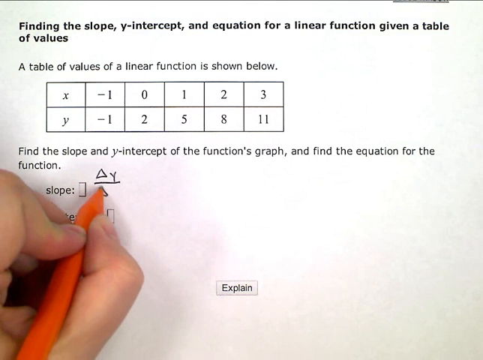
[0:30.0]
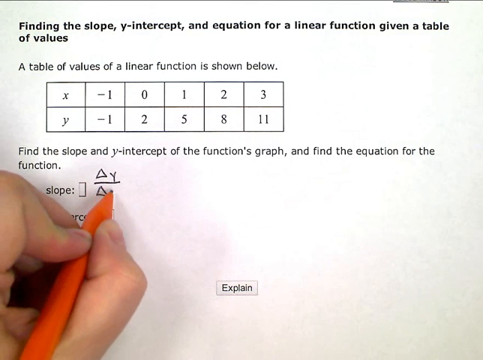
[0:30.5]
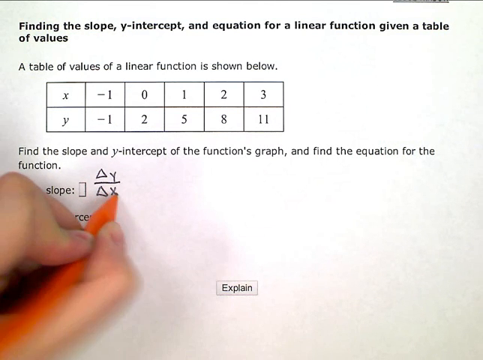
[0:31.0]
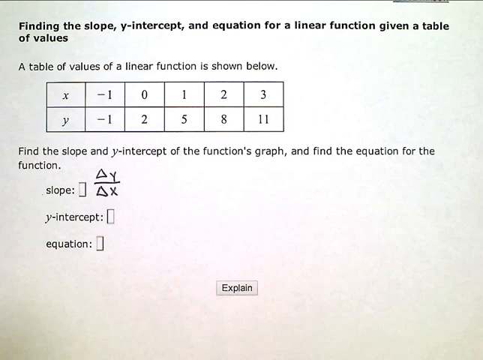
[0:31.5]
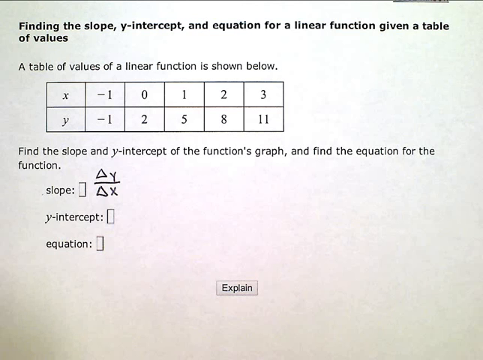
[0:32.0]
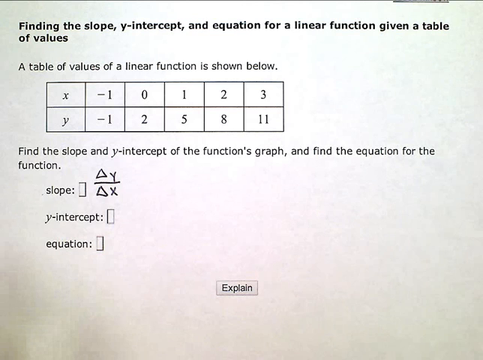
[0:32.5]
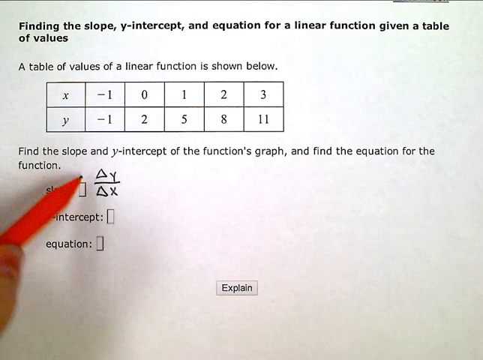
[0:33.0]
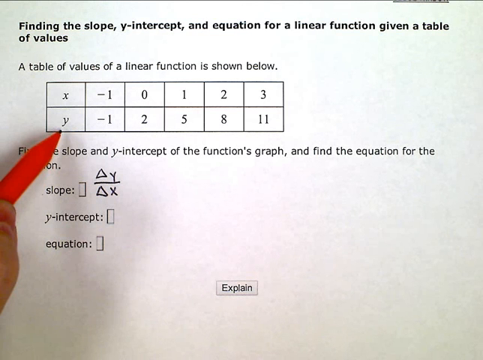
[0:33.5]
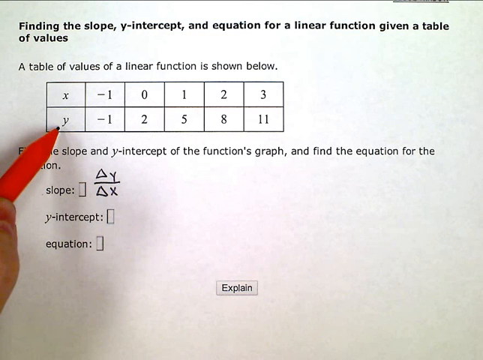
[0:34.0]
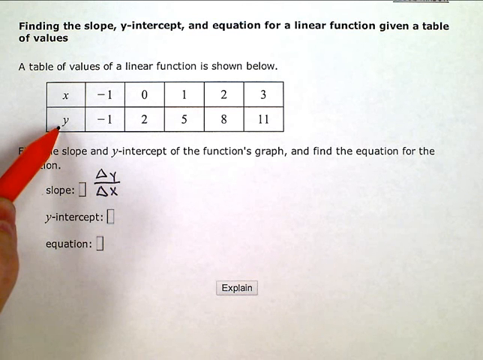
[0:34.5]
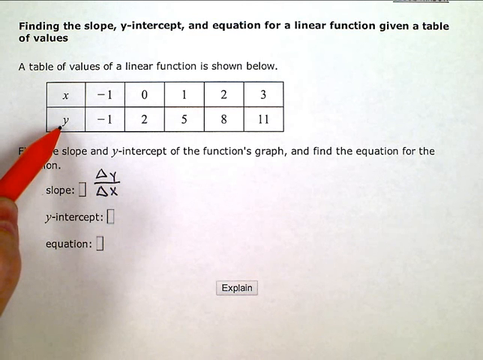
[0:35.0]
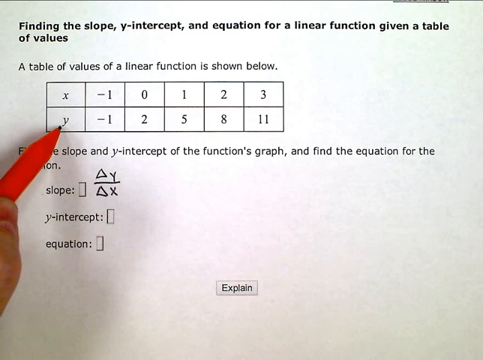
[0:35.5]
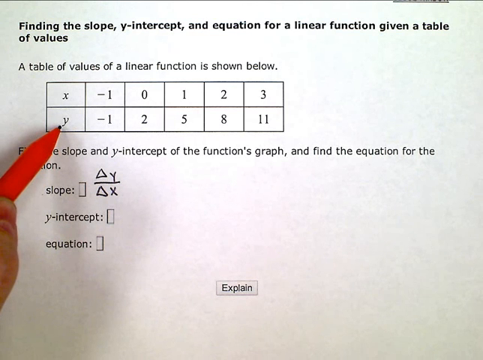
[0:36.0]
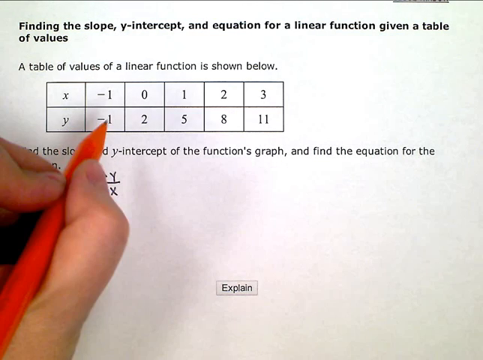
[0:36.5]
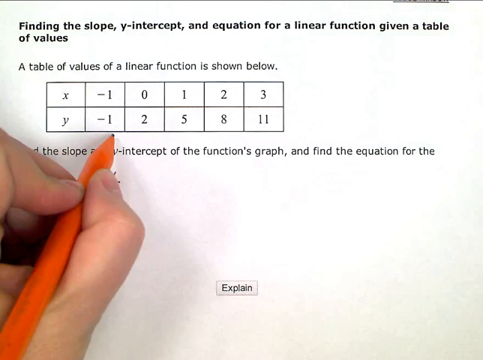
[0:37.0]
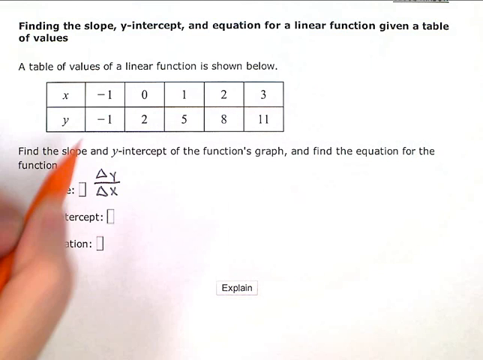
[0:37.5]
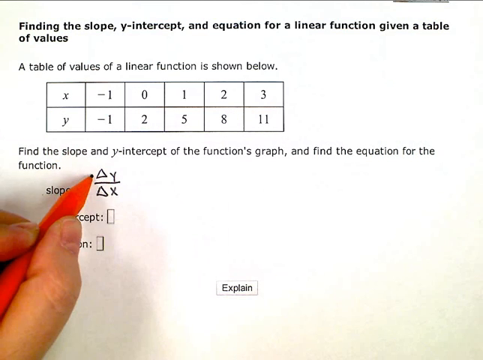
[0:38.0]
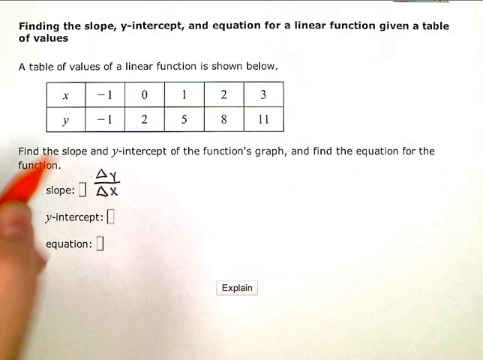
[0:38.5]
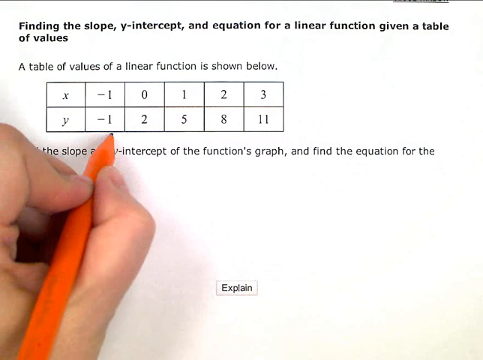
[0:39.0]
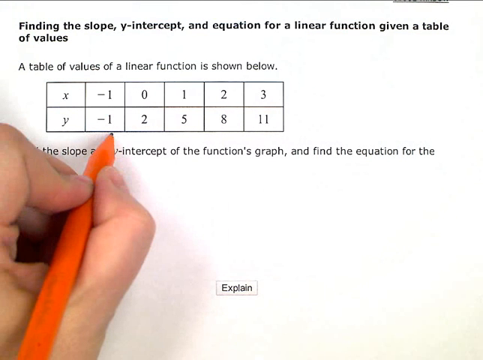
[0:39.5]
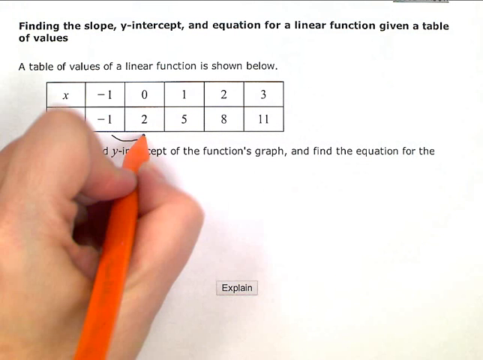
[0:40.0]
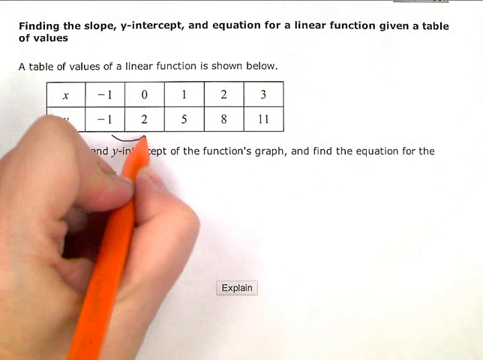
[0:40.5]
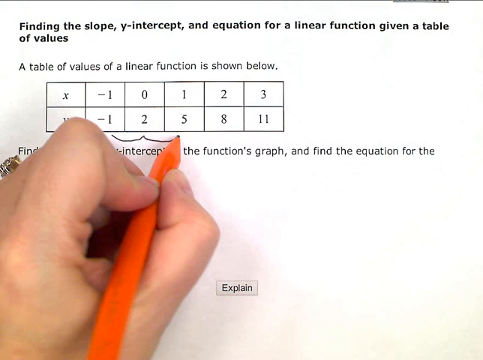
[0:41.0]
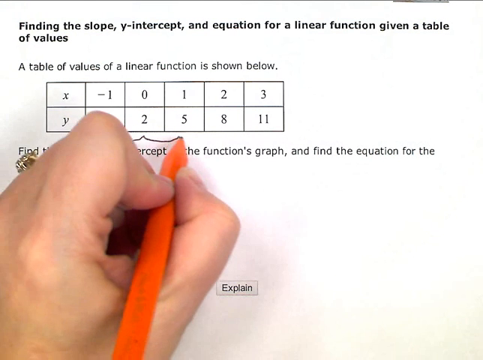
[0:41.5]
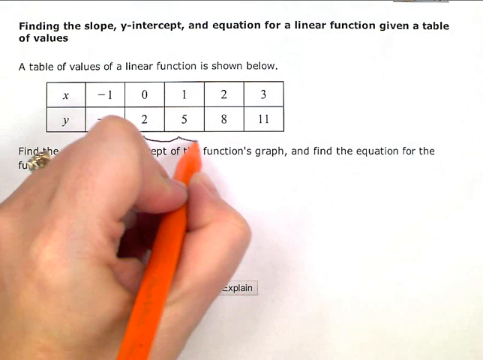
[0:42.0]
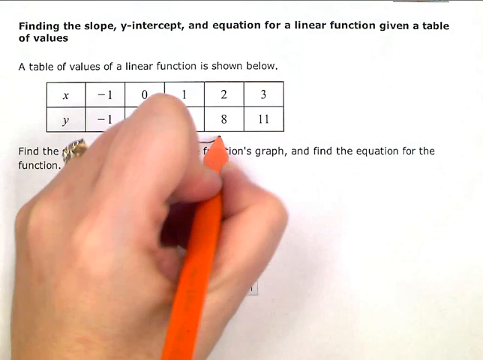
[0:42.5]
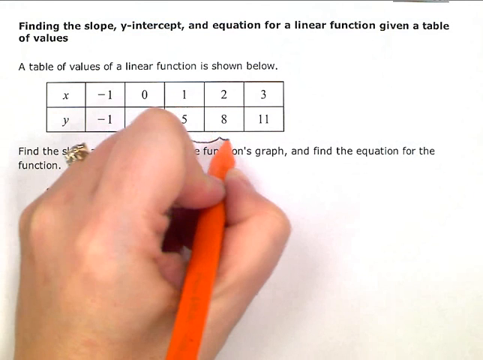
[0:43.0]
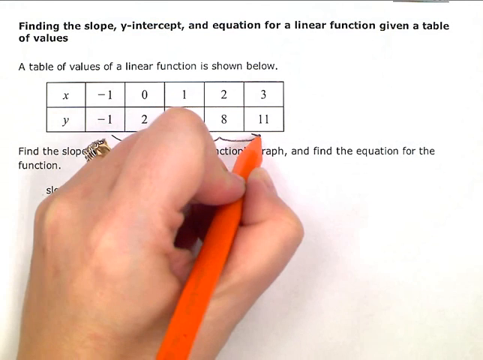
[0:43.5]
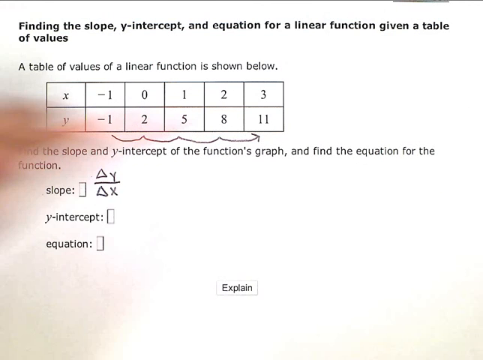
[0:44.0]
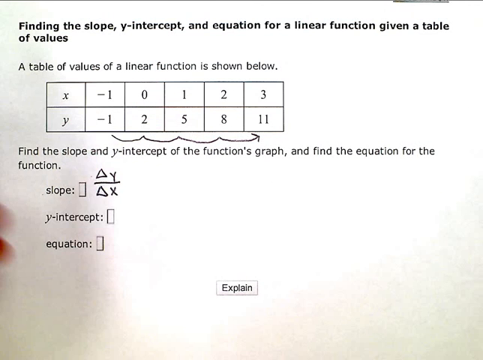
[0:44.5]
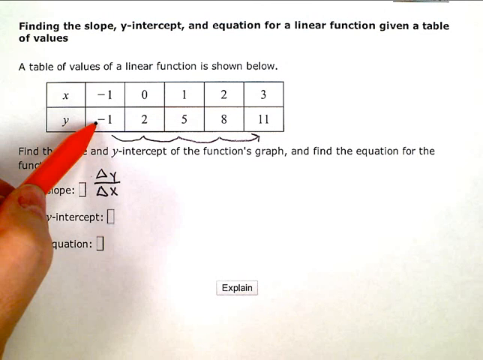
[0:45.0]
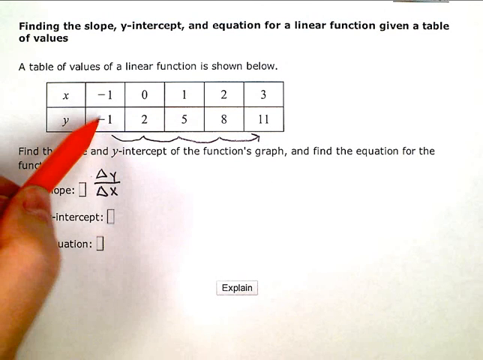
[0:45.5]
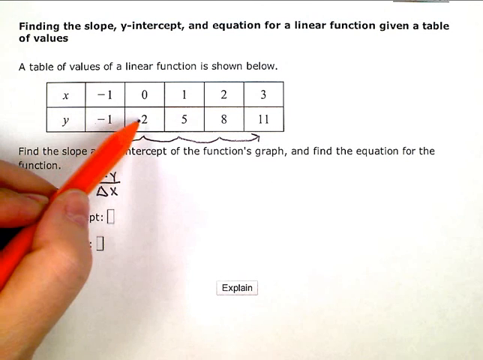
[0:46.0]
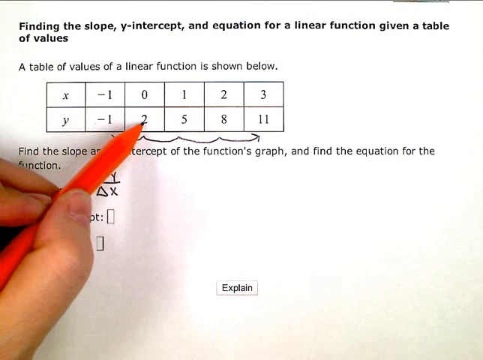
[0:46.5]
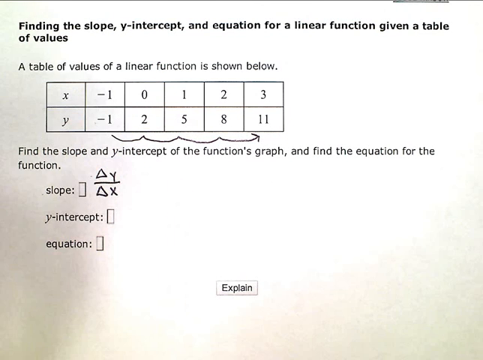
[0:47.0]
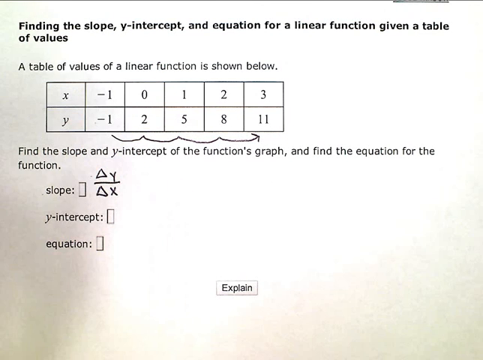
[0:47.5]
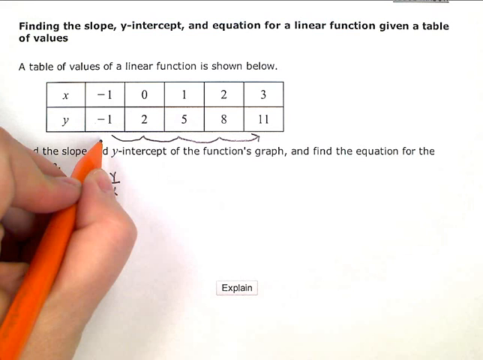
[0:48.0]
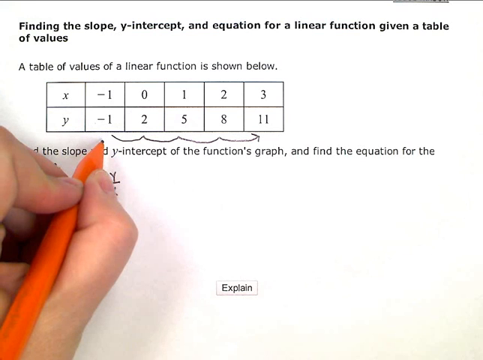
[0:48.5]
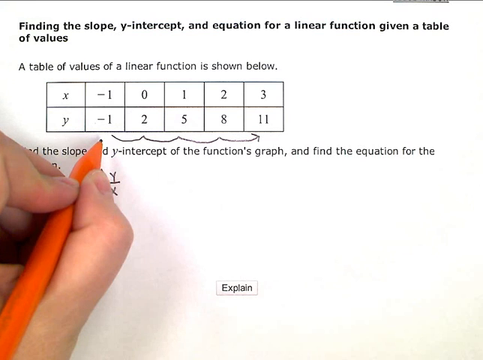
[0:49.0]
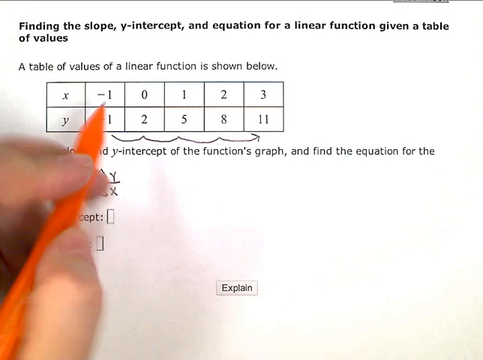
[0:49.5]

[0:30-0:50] The same question reads "finding the slope, y-intercept, and equation for linear function given a table of values", with a table of values of a linear function shown below. The x values are -1, 0, 1, 2 and 3, and the y values are -1, 2, 5, 8 and 11. Below are the instructions "finding the slope and y-intercept of function graphs" and "find equation for the function", with sections for slope, y-intercept and equation. A man has written the equation delta y divided by delta x; he points at the x and at the delta, and shows that -1 is connected to 2, 2 to 5, and 5 to 8. He writes the equation close to the slope.